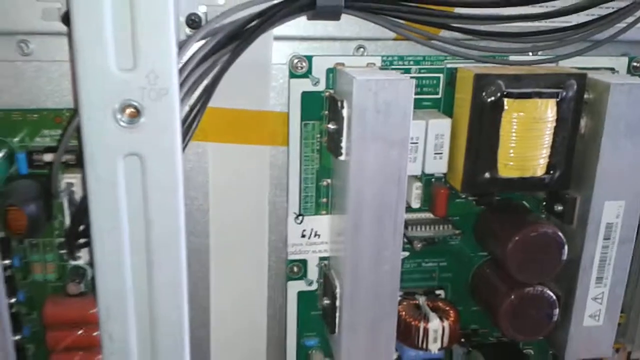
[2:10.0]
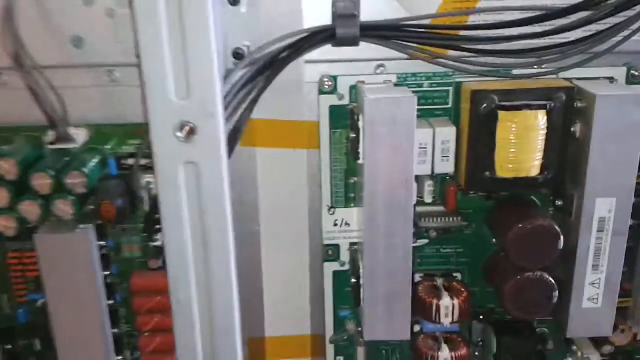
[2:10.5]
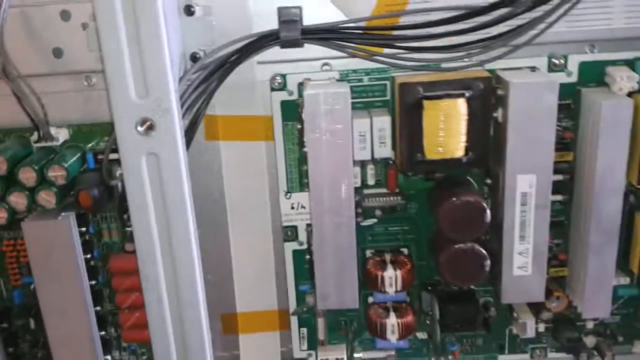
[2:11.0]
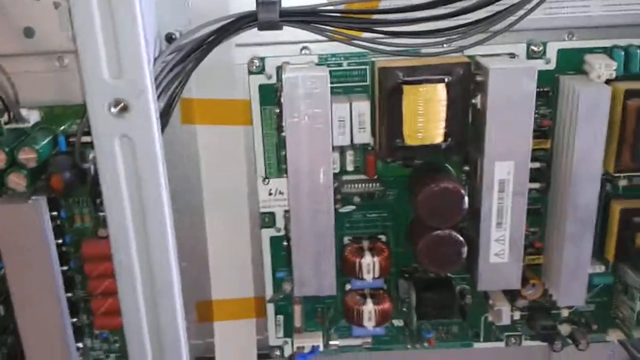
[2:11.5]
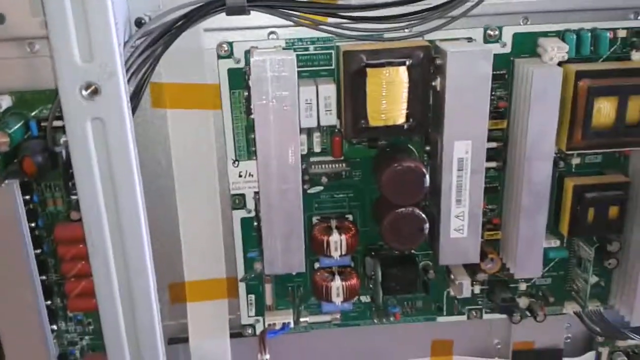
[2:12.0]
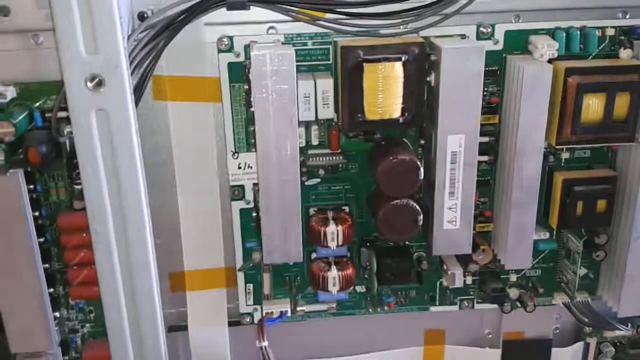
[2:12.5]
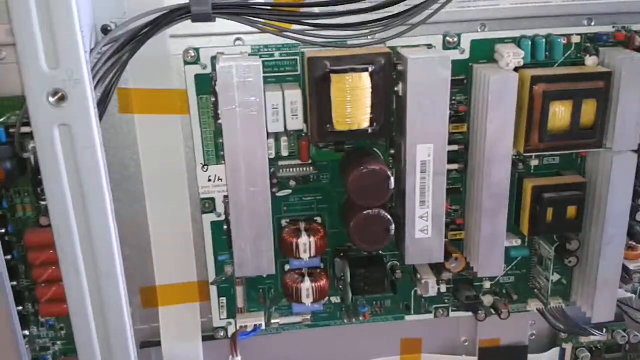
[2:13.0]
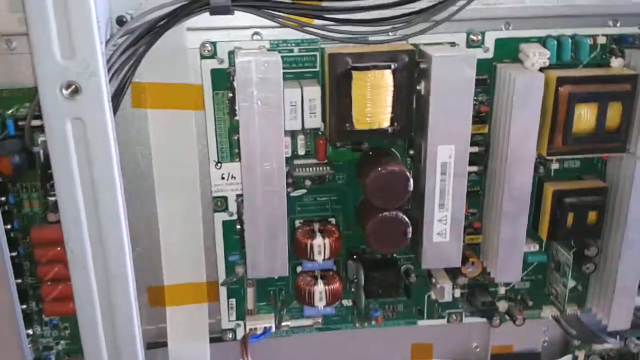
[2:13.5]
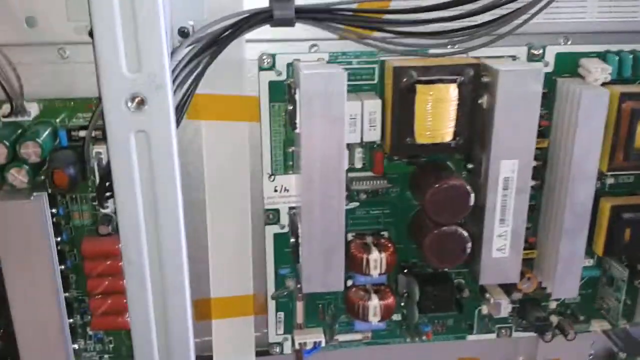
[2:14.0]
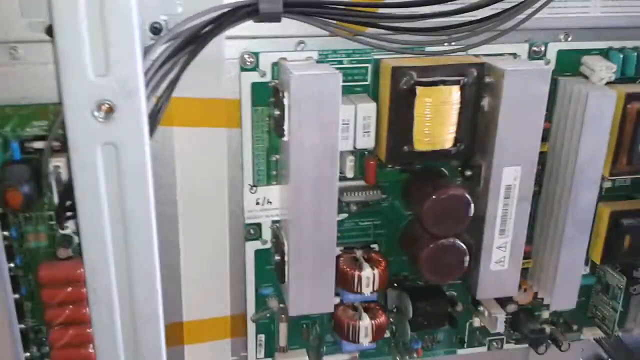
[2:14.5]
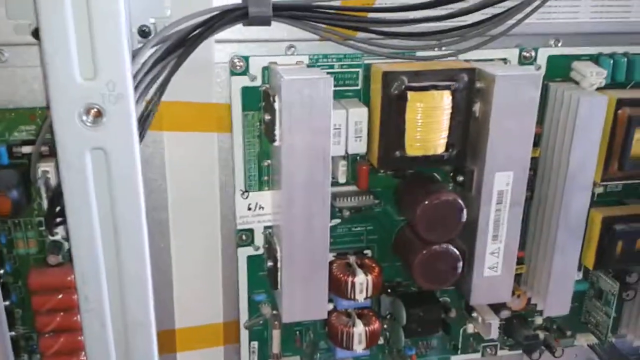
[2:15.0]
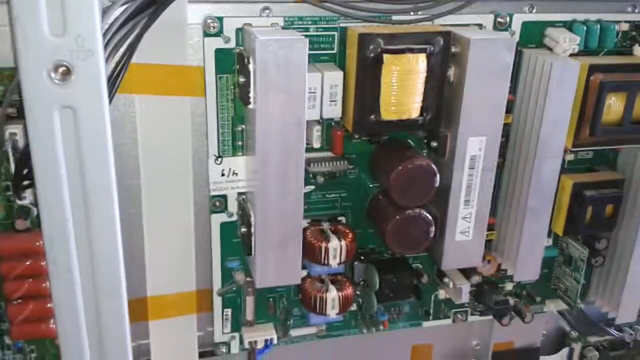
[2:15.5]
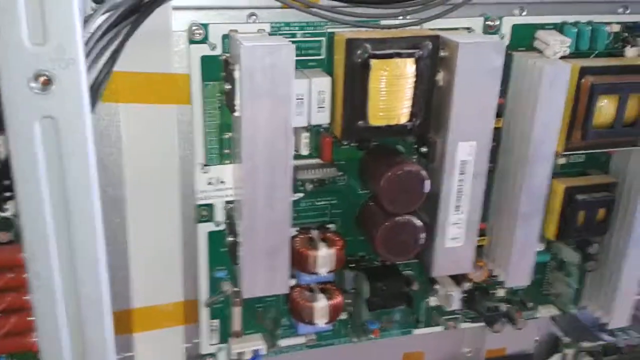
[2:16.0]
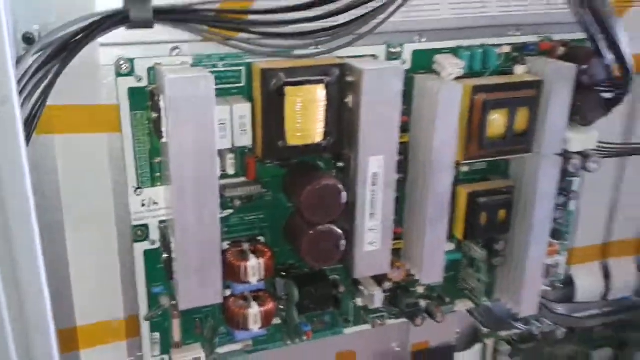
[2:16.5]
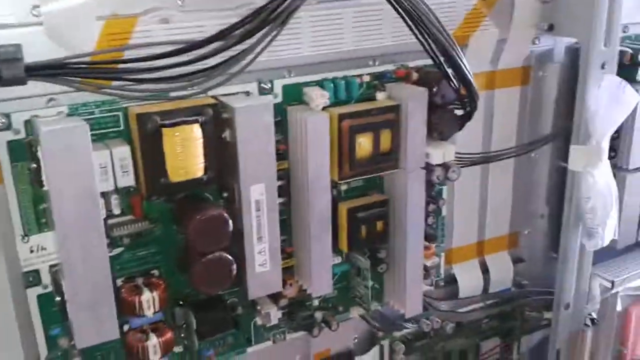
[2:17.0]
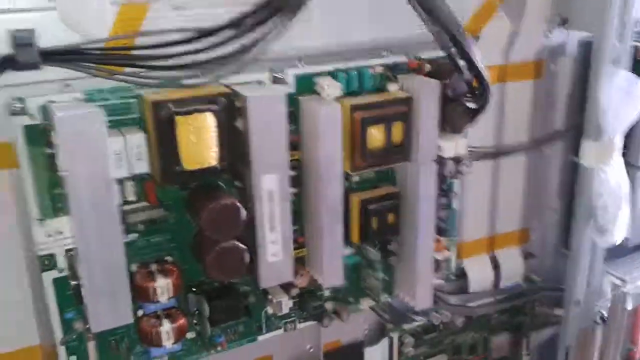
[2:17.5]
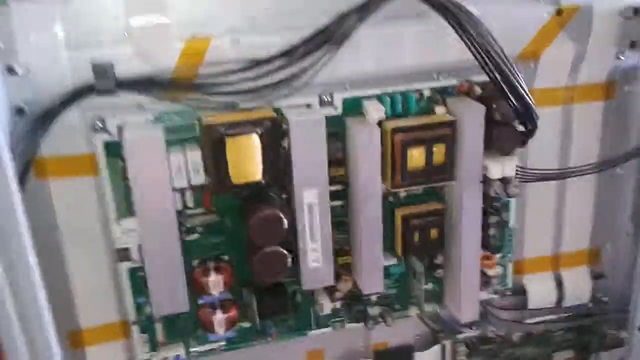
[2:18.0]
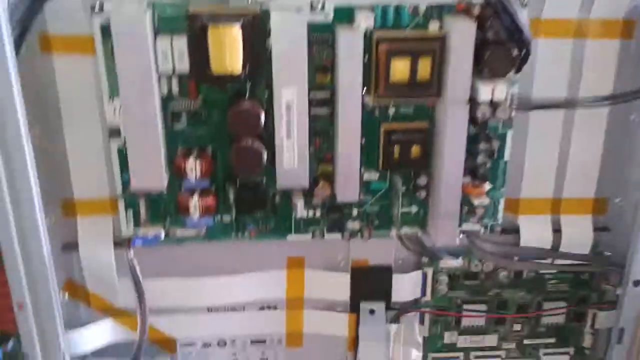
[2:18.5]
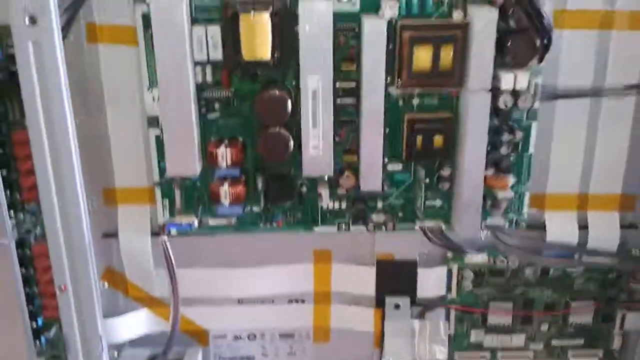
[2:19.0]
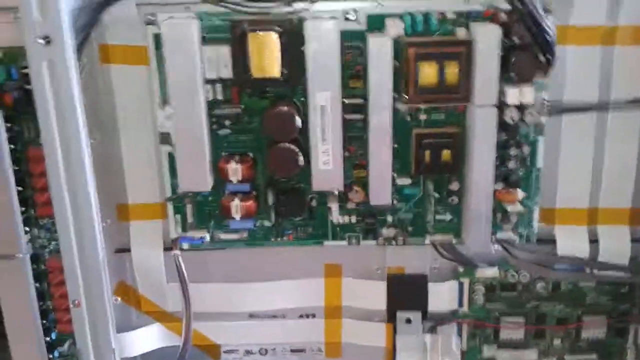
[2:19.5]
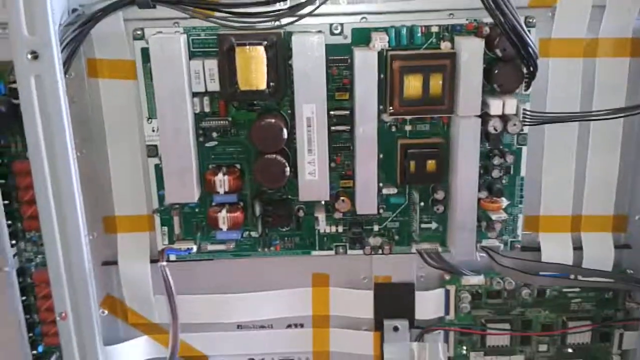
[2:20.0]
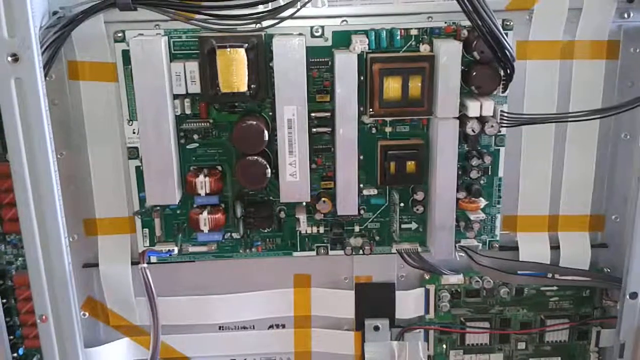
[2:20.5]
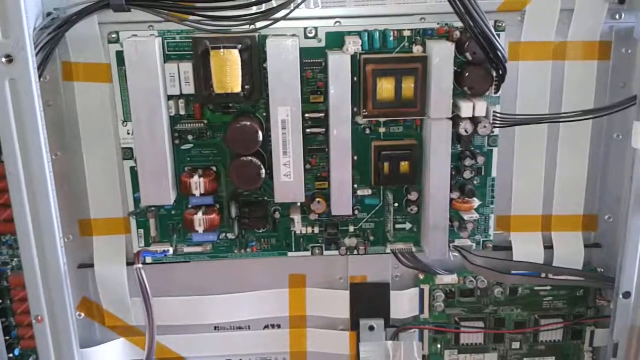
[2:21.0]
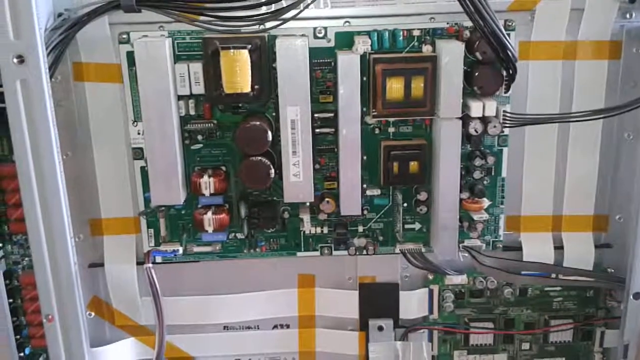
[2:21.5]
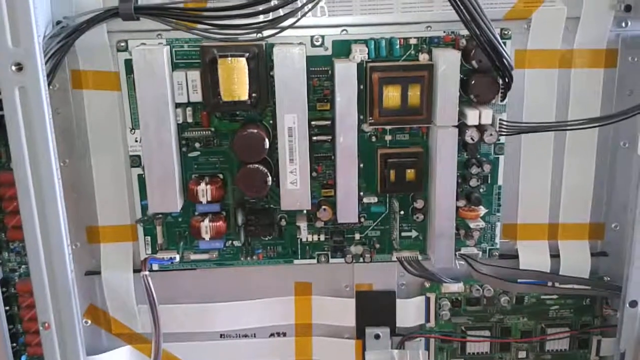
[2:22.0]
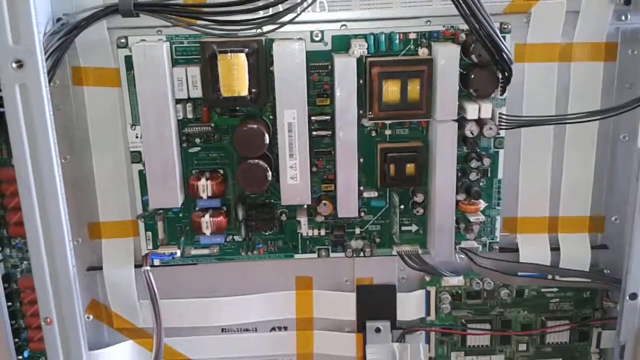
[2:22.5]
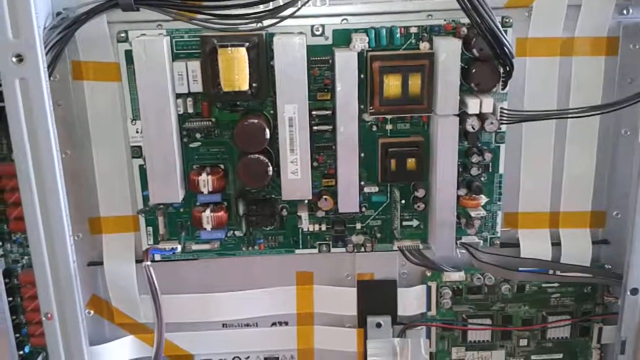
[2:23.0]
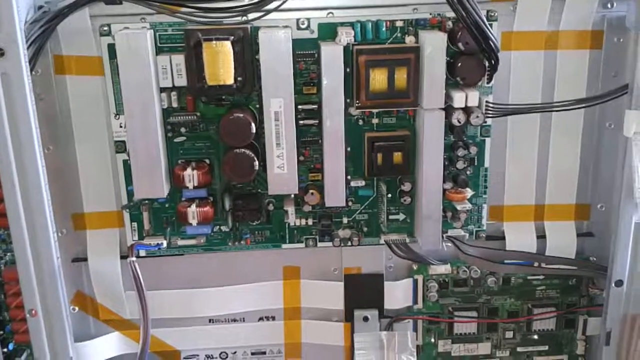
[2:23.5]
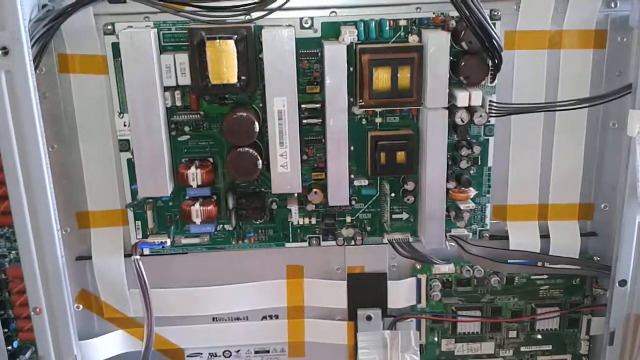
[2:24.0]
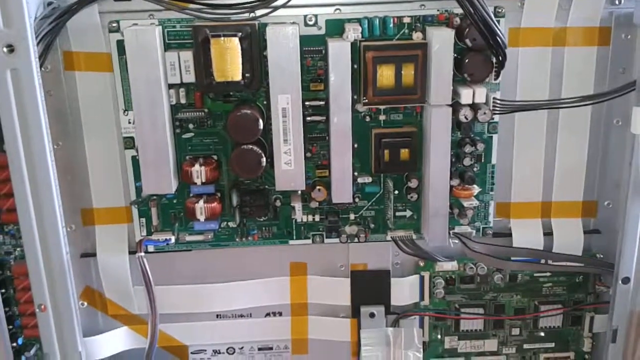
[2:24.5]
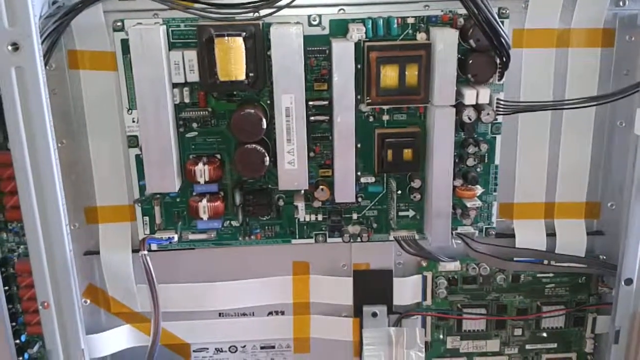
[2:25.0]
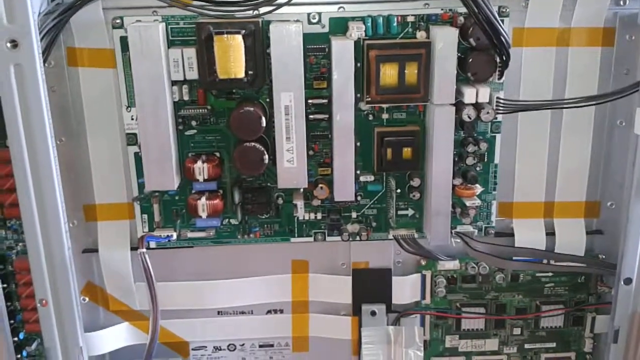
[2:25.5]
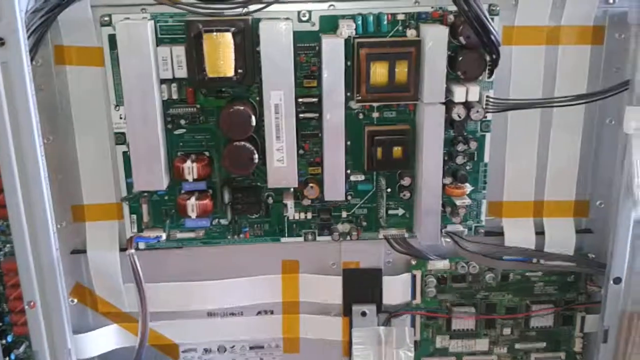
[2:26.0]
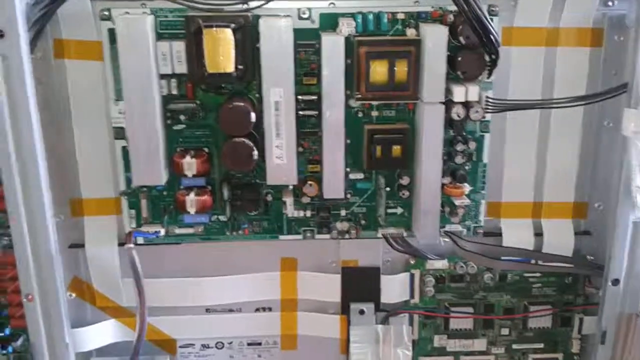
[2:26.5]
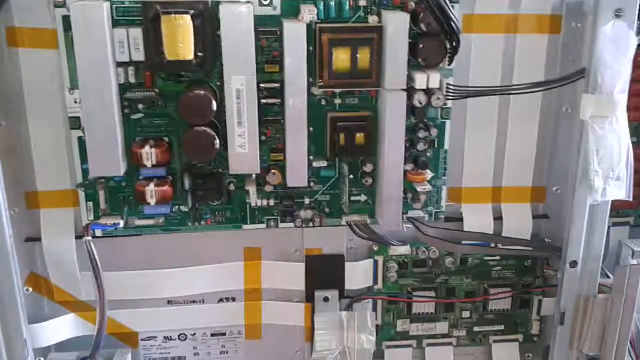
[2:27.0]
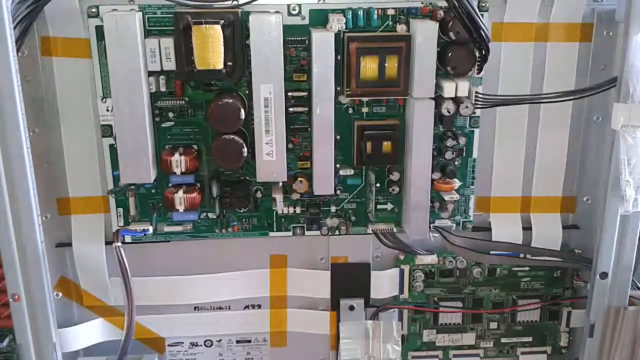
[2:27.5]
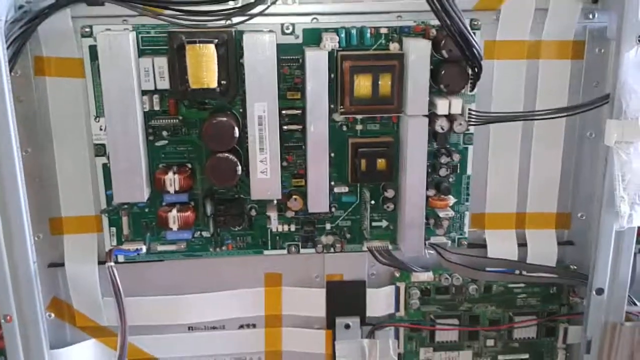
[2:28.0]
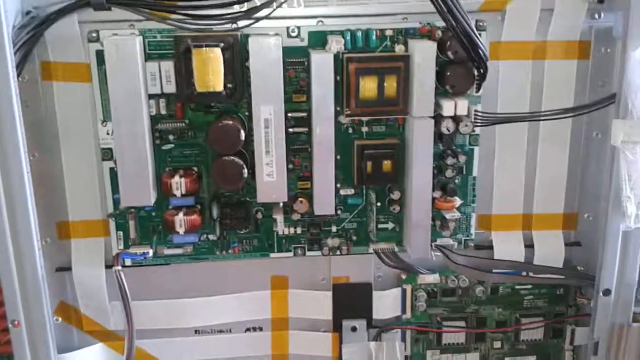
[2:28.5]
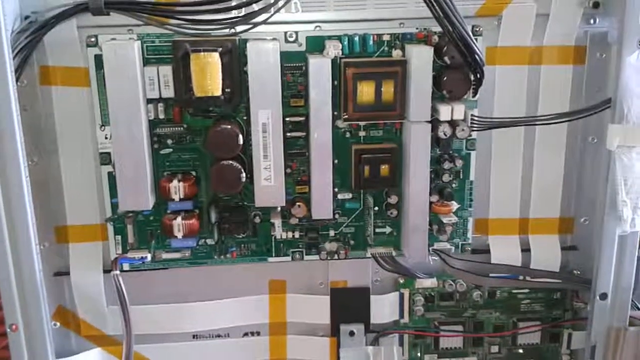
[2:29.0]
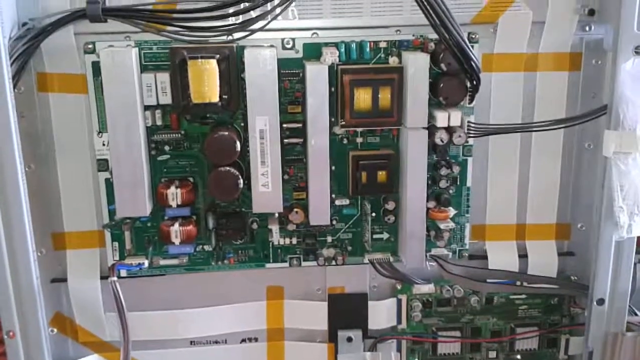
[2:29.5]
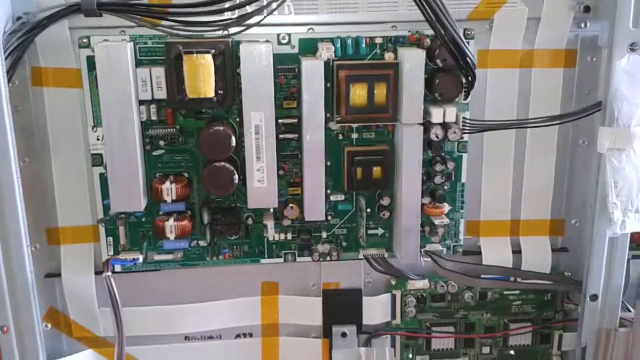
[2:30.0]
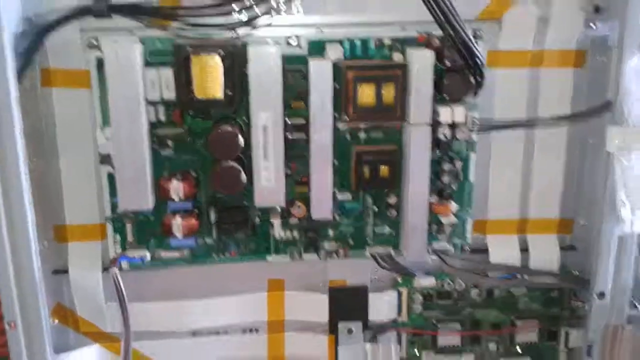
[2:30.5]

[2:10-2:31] A close-up shows a dark green circuit board with hundreds of little pieces connected to it: resistors, capacitors, different colored diodes plugged into the board, transistors, integrated circuits and two relay switches. Two large round white inductors have copper coil wiring running around the whole inductor, and they are separated by blue transistors or resistors. The person then zooms out to show the whole board. Black and gray wiring connects into the top right corner of the circuit board, runs along the top, and is clipped up above the board so it doesn't get mixed up on it or lie on top of it; the wiring goes along the top over to the left side of the board, probably to another circuit board.